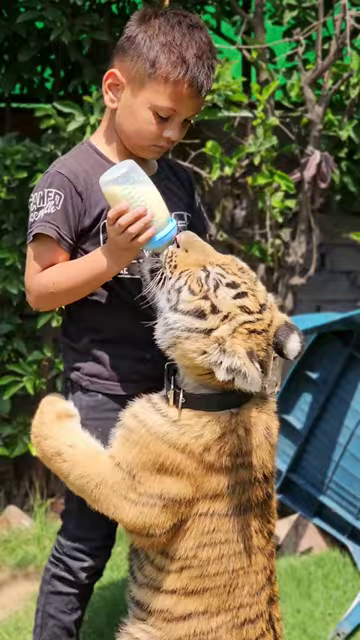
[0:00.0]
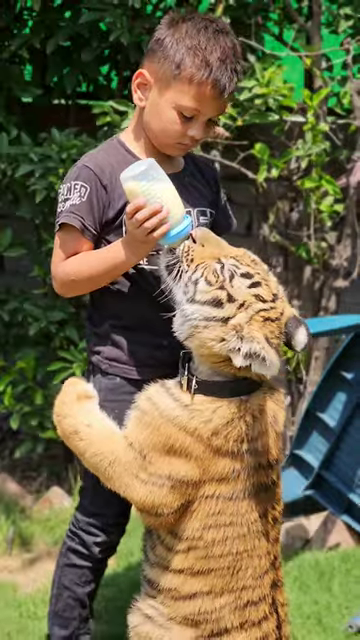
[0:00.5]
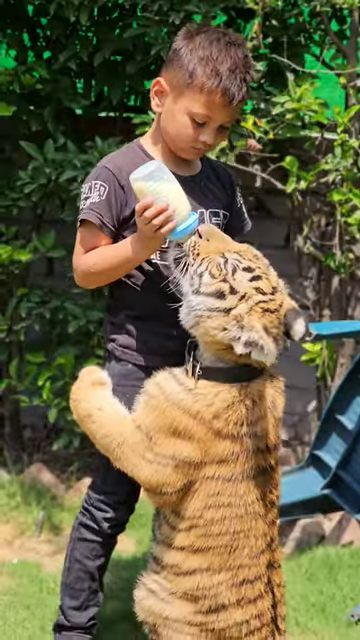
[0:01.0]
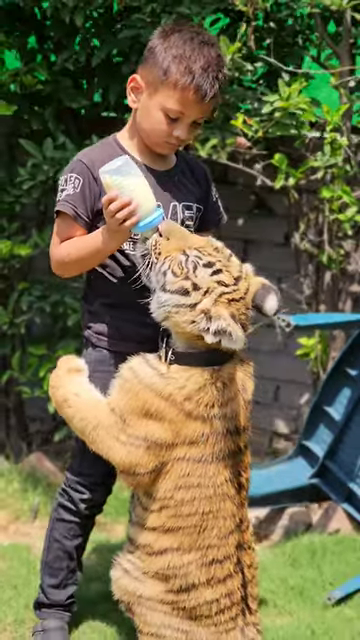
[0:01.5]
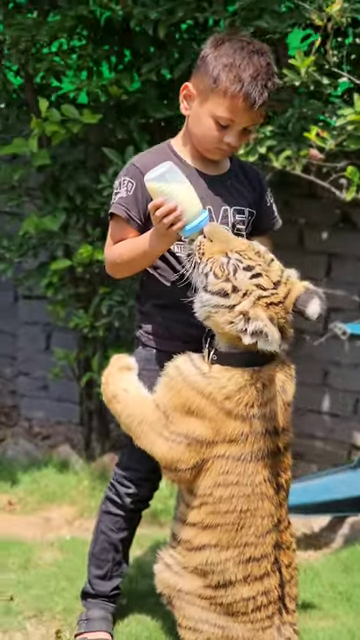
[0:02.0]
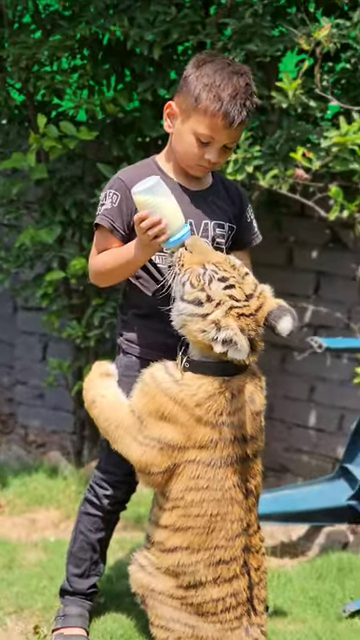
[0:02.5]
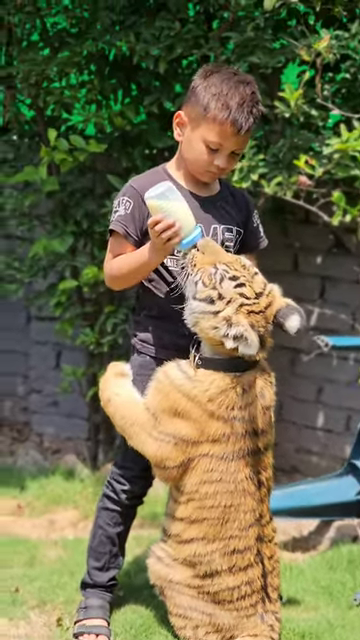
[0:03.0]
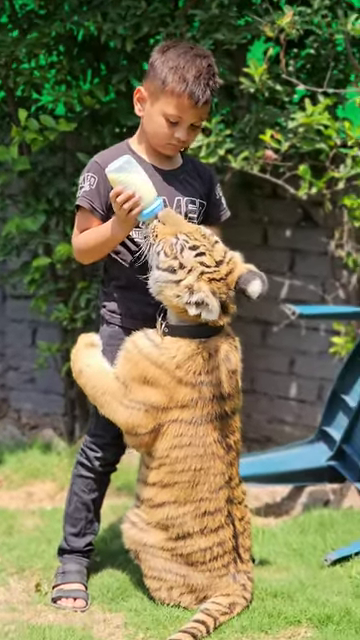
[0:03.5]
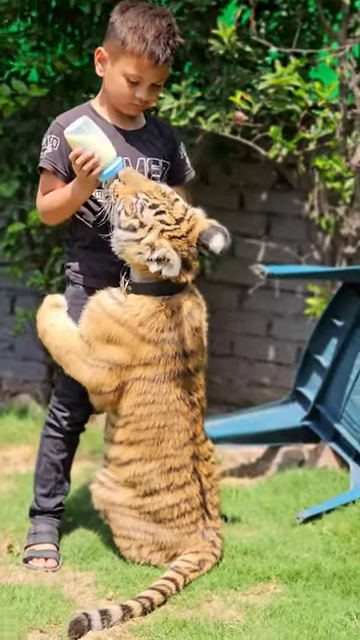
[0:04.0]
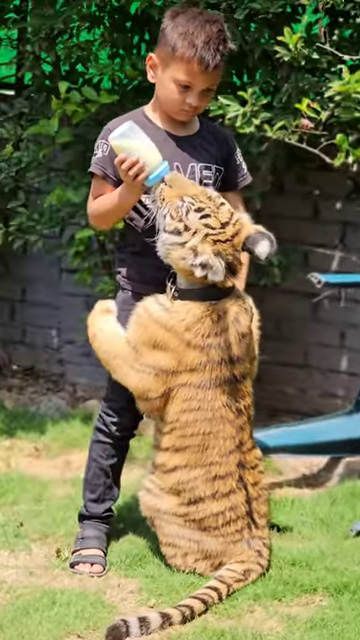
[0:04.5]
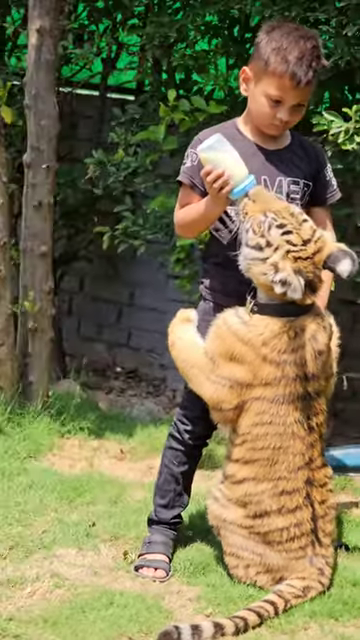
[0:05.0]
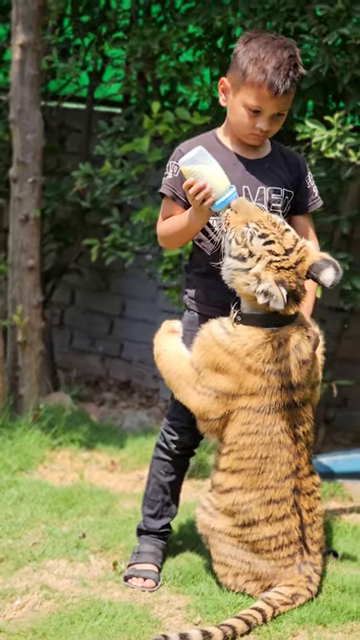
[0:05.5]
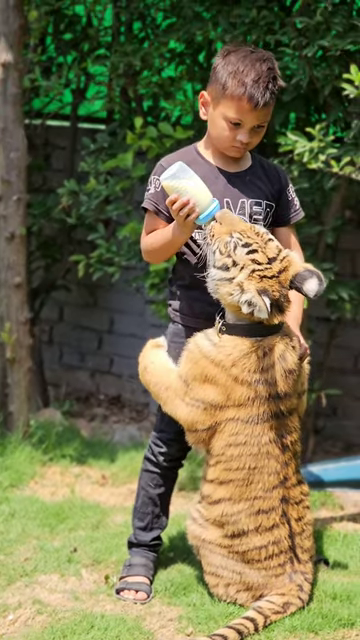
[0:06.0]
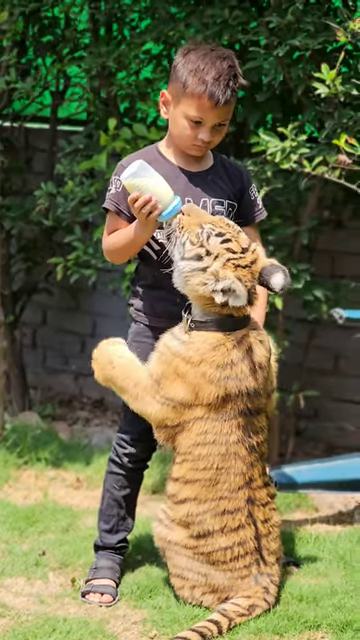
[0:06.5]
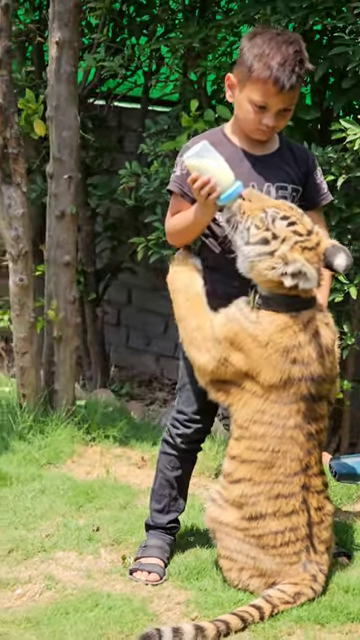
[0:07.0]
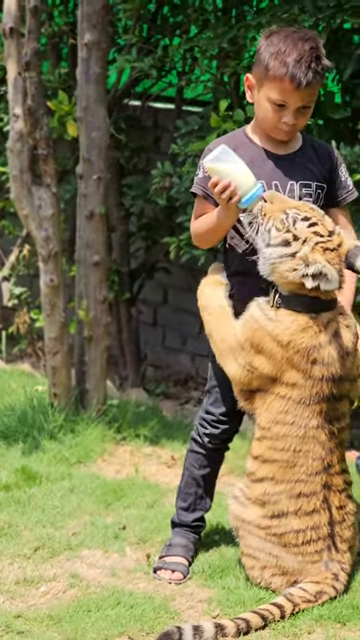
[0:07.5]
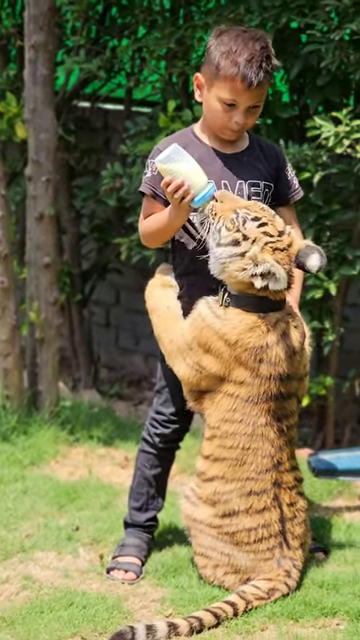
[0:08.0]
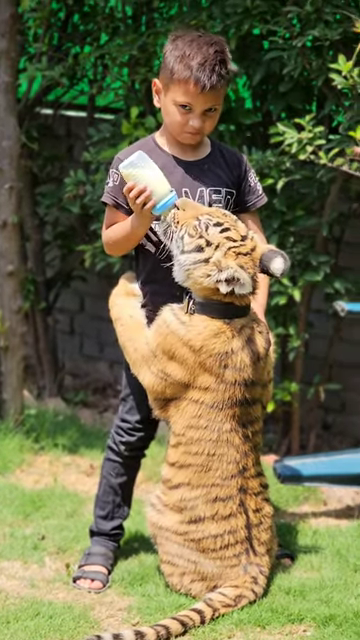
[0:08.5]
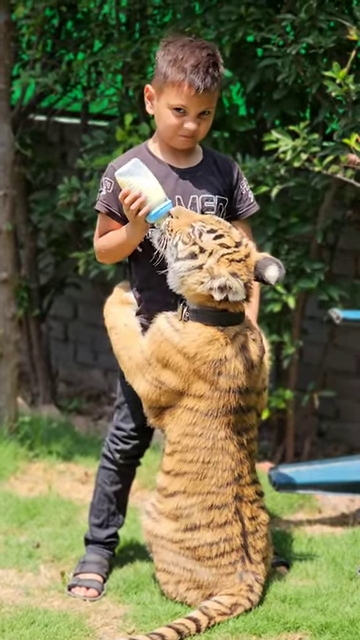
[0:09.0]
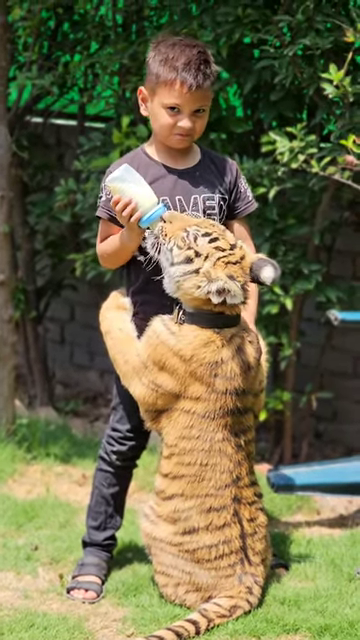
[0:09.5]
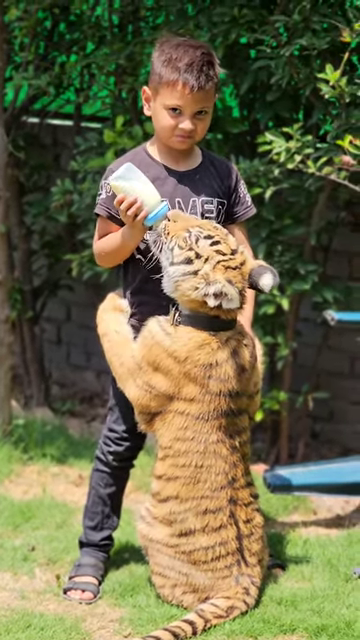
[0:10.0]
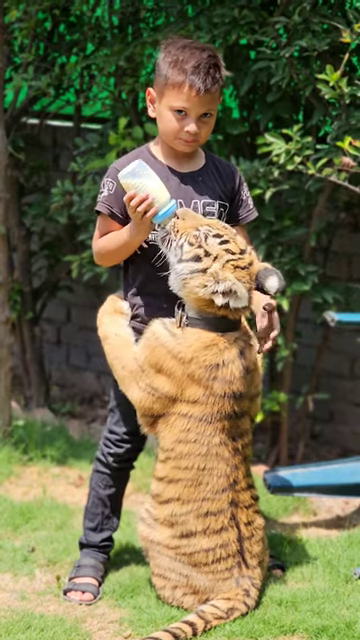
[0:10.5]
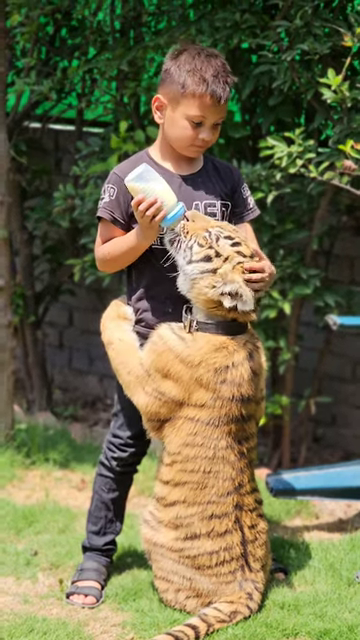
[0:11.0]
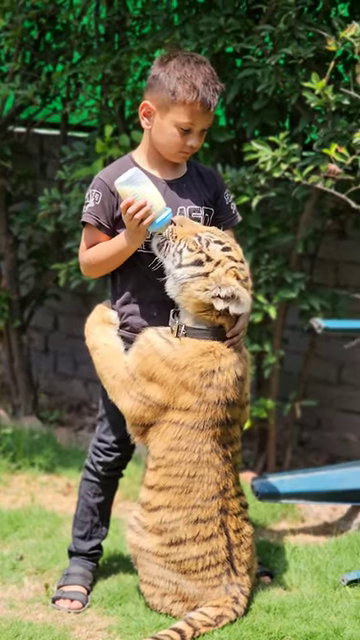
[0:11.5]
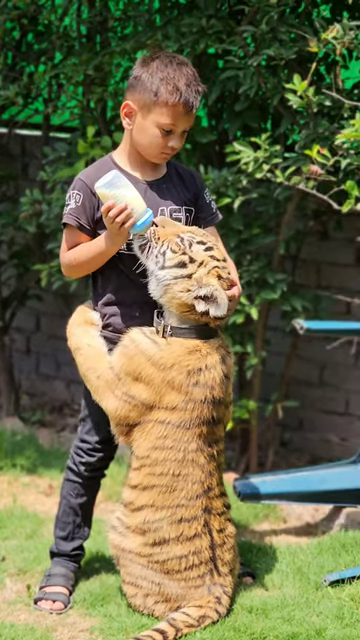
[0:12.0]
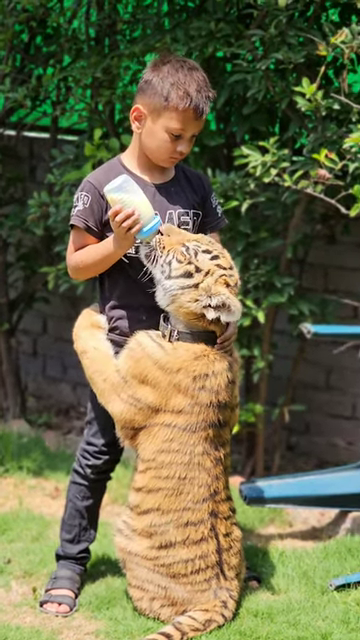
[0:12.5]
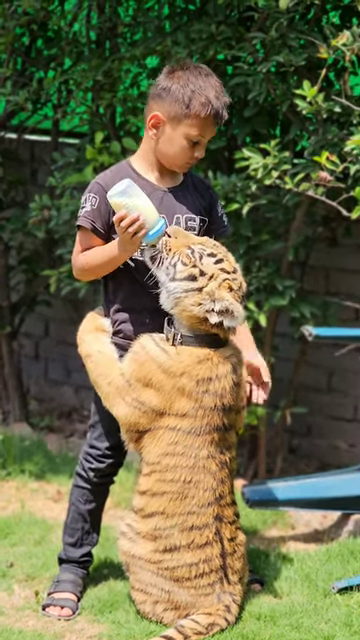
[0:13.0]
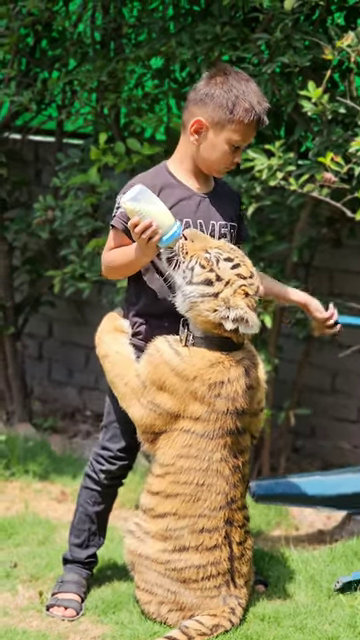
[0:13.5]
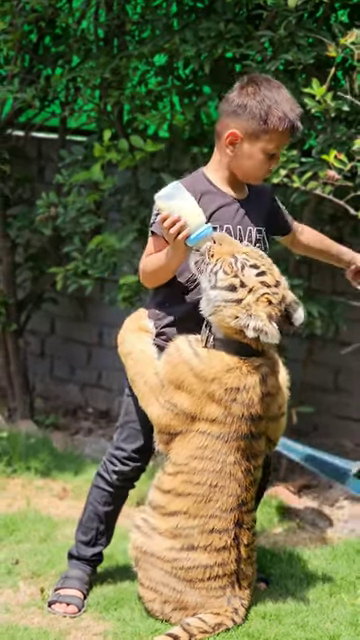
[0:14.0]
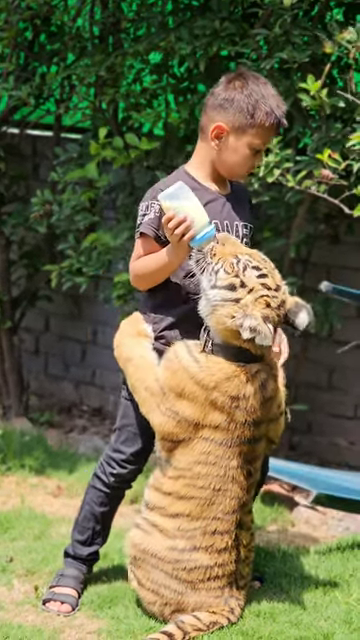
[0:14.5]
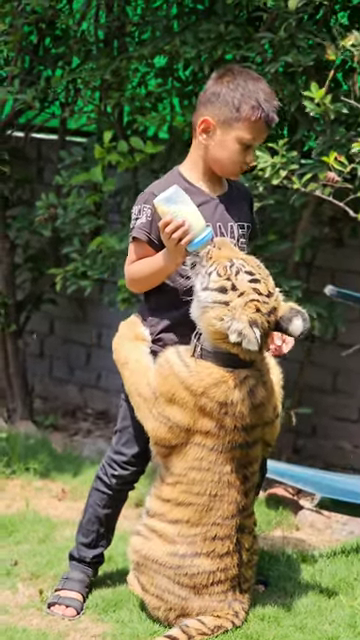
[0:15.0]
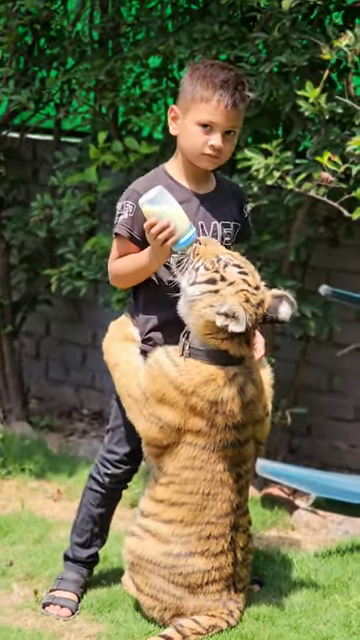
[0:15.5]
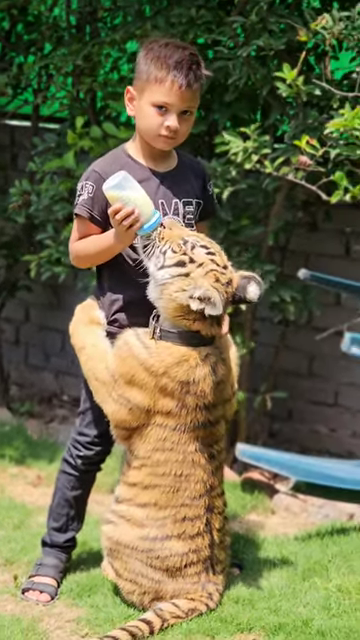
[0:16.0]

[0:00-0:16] The outdoor setting looks like someone's backyard. A gray brick wall is in the background with some trees, and in the foreground is an area of green grass. A little boy, probably about five or six years old, has a baby tiger that is sitting up on its hind legs, its front paws holding on to the boy's waist. The boy holds a baby bottle that looks like it has some milk in it and feeds the tiger, gently caressing the tiger's head as he does. A blue chair is turned over on its side right next to where the boy and the tiger are standing. The boy appears kind of annoyed with the chair and kind of pushes it off to the side.